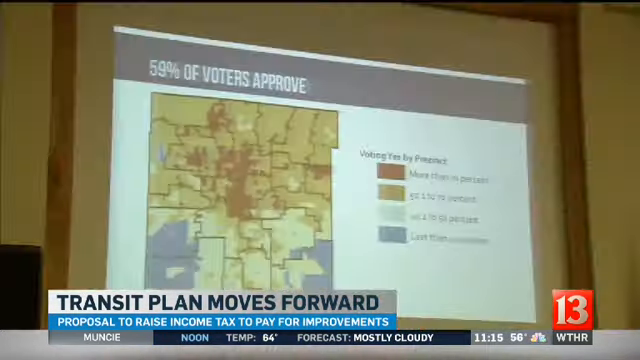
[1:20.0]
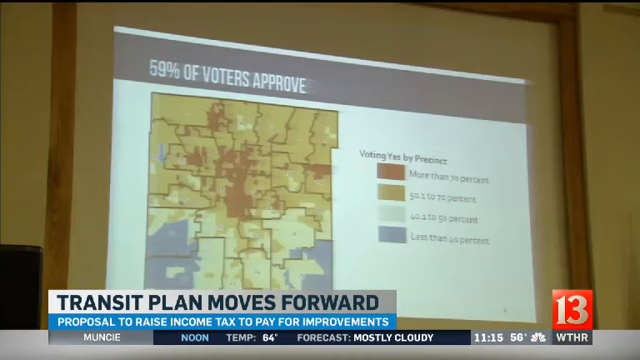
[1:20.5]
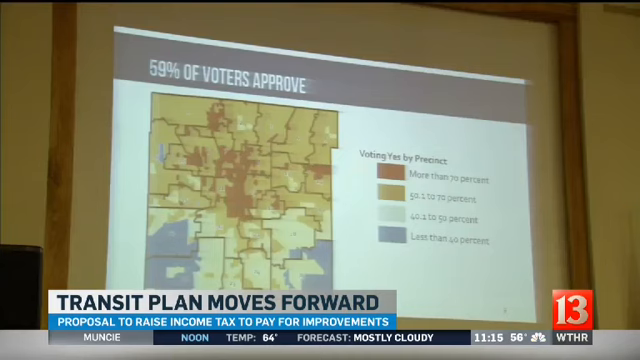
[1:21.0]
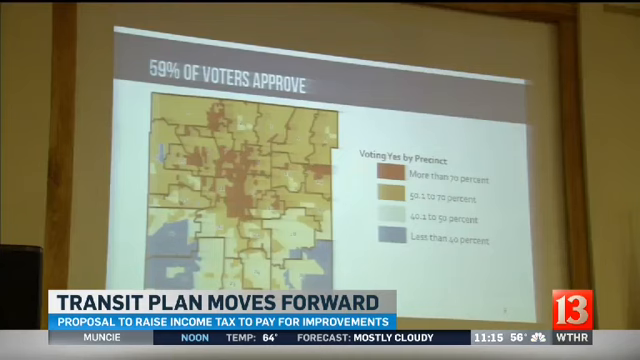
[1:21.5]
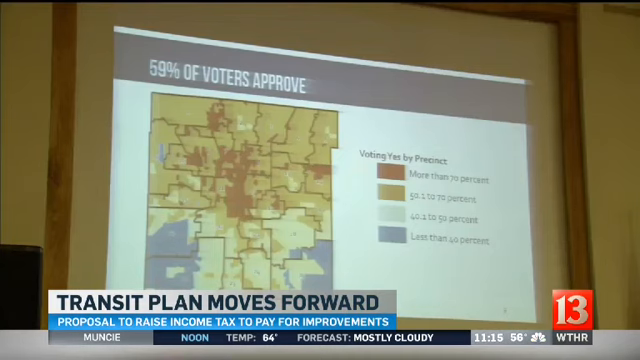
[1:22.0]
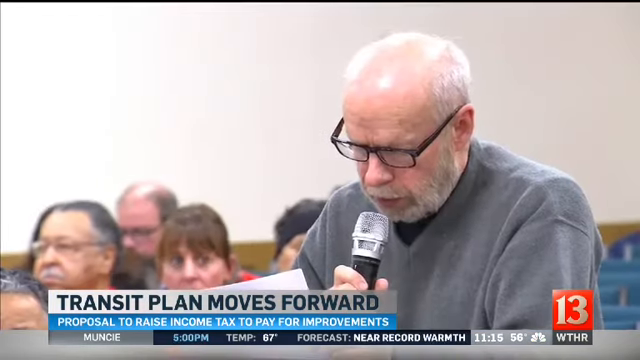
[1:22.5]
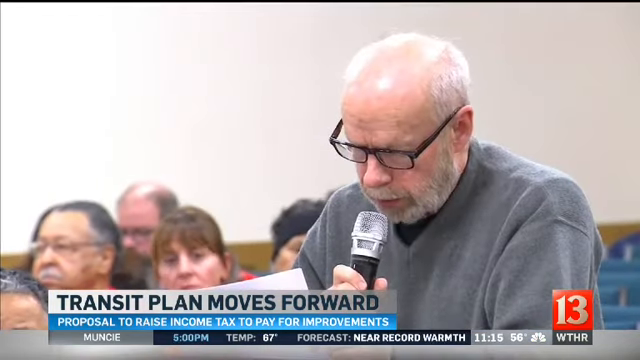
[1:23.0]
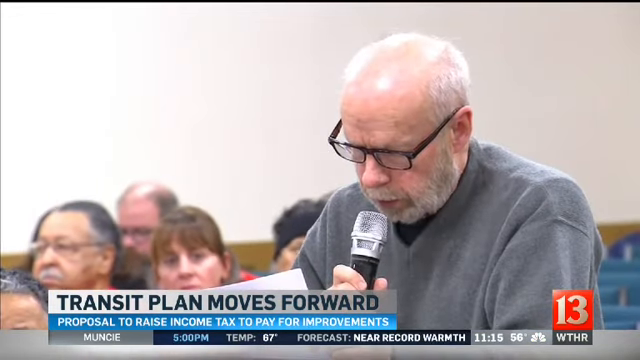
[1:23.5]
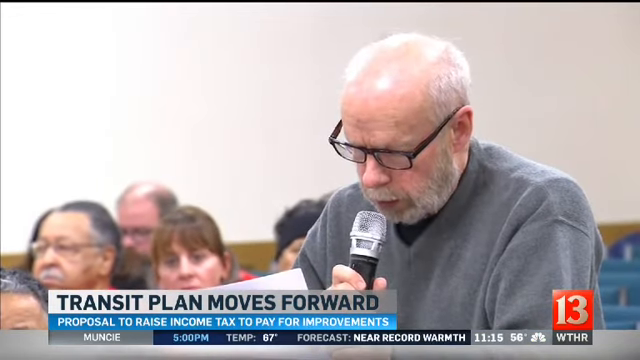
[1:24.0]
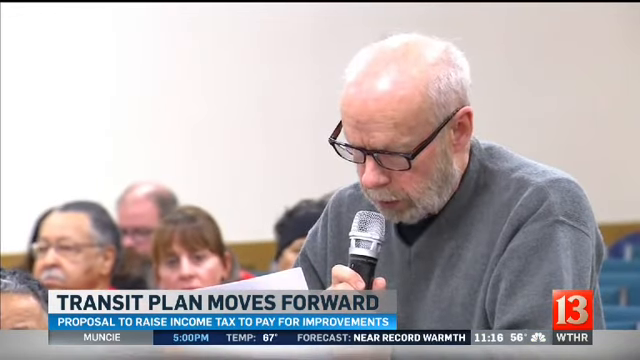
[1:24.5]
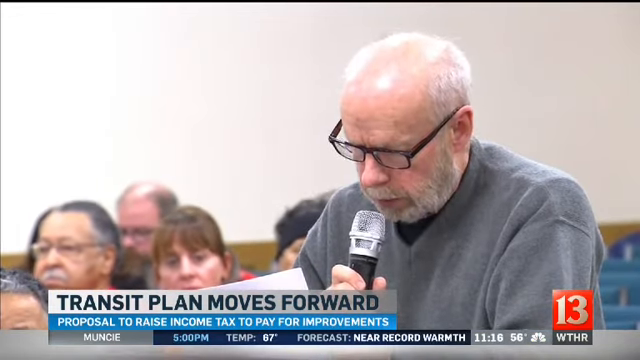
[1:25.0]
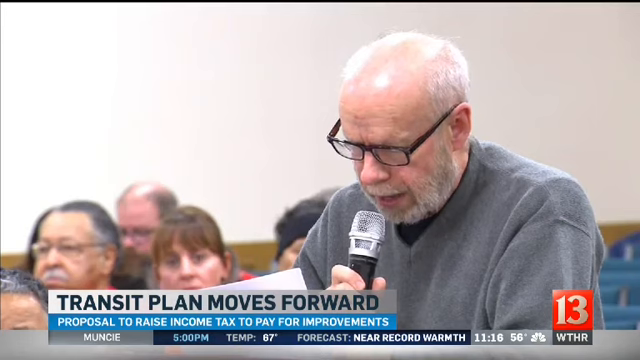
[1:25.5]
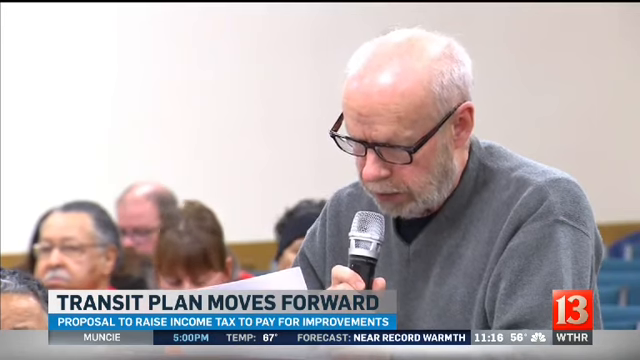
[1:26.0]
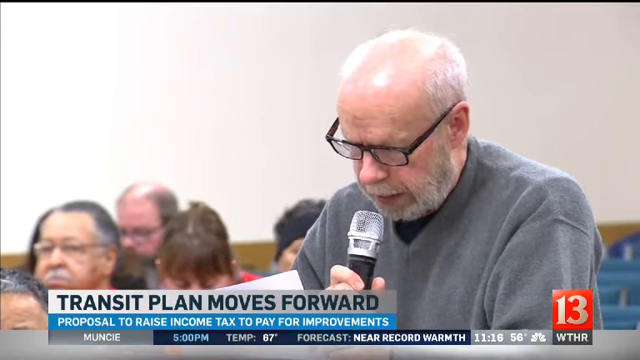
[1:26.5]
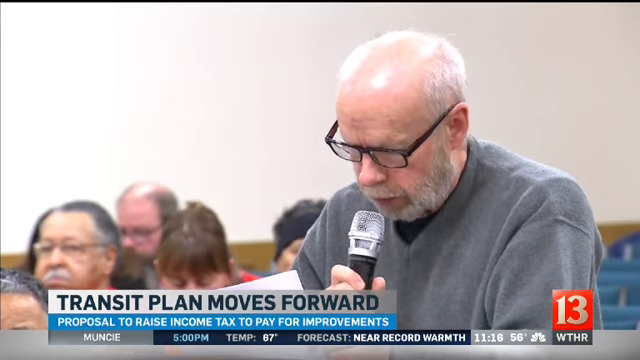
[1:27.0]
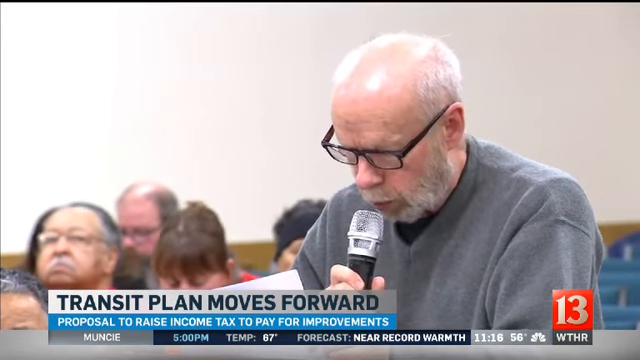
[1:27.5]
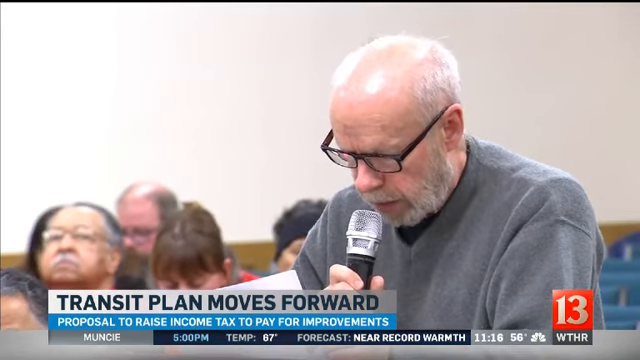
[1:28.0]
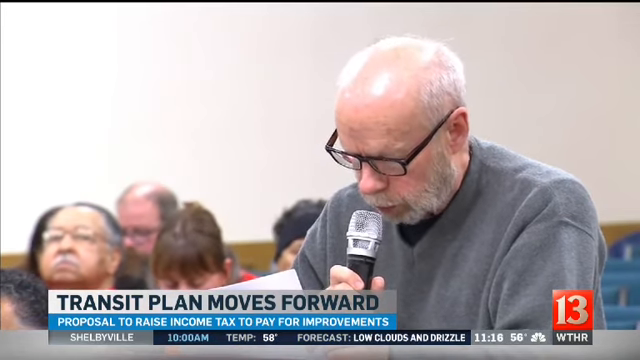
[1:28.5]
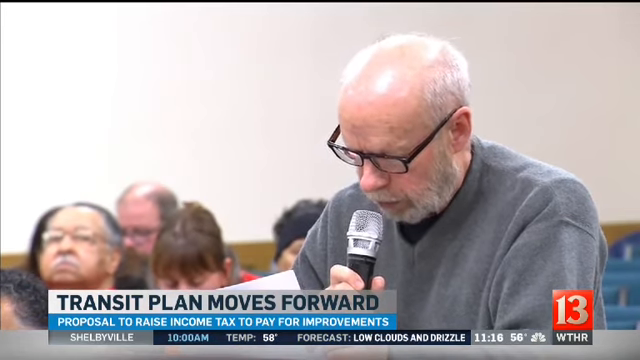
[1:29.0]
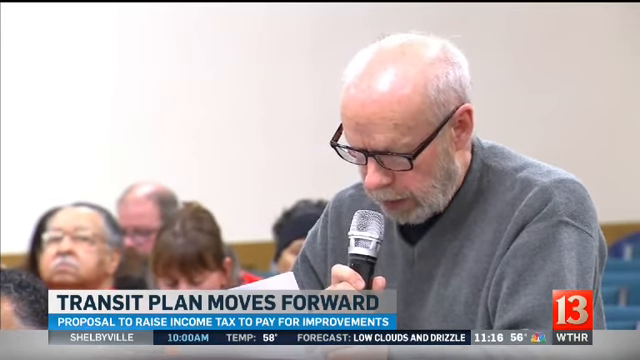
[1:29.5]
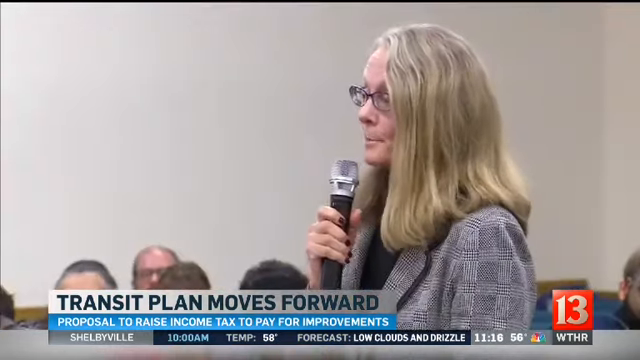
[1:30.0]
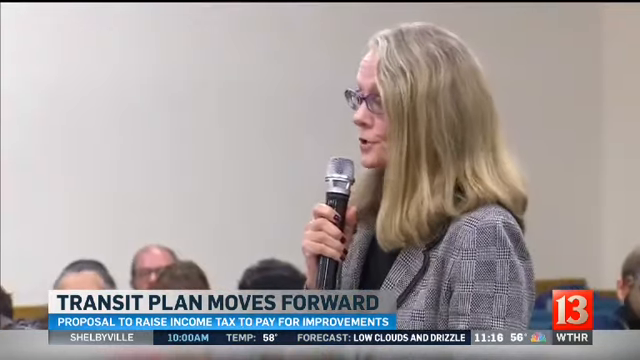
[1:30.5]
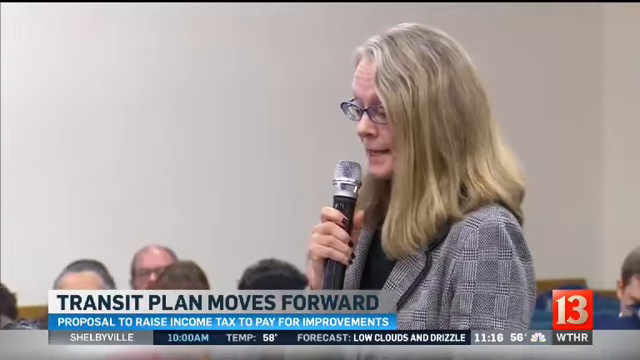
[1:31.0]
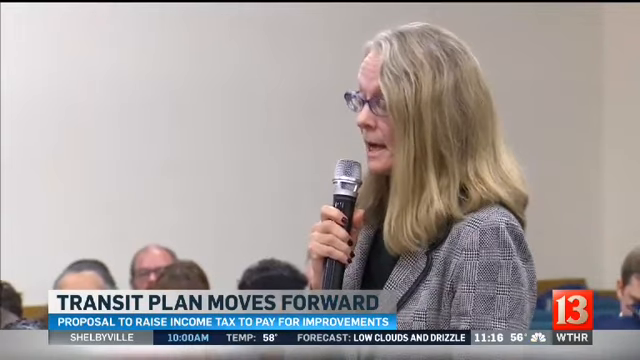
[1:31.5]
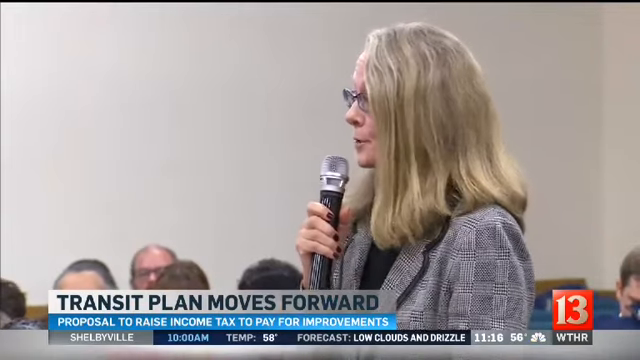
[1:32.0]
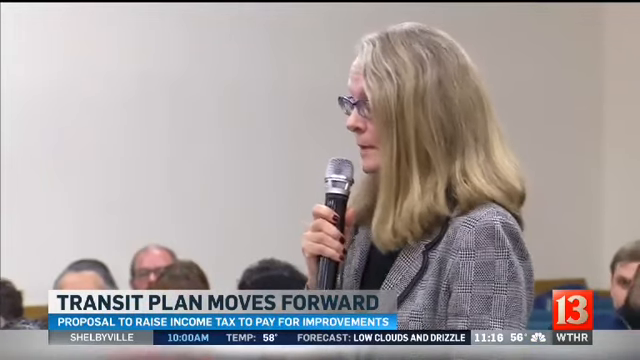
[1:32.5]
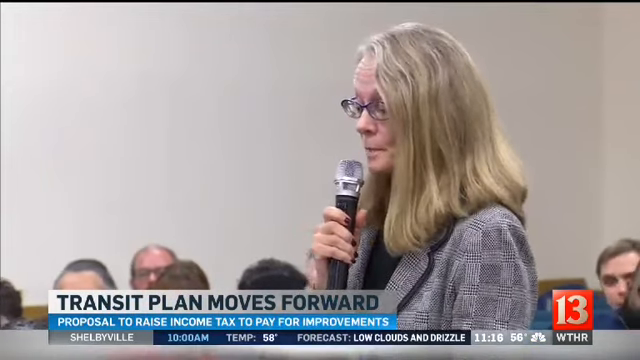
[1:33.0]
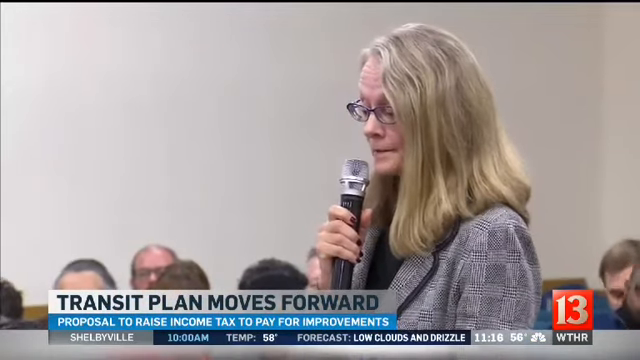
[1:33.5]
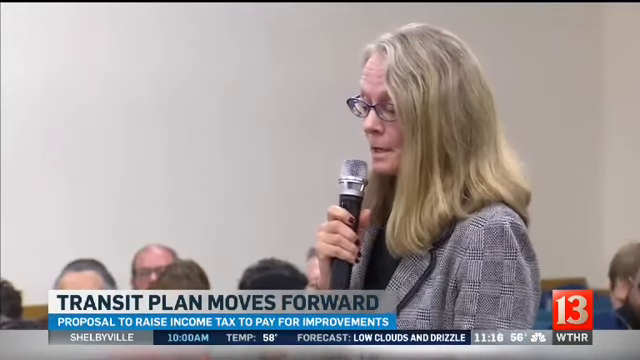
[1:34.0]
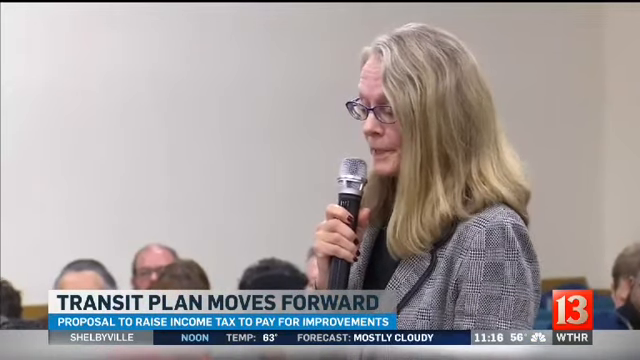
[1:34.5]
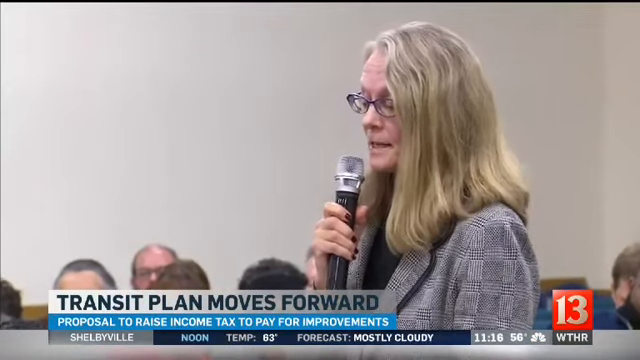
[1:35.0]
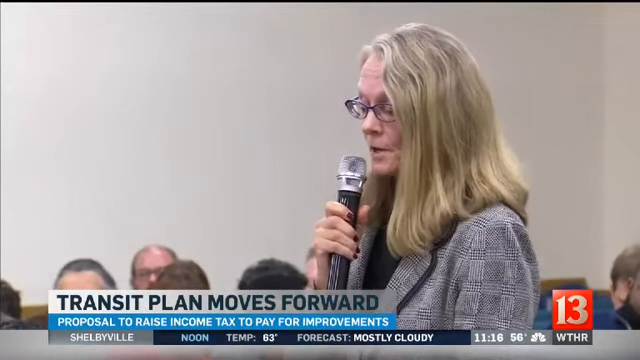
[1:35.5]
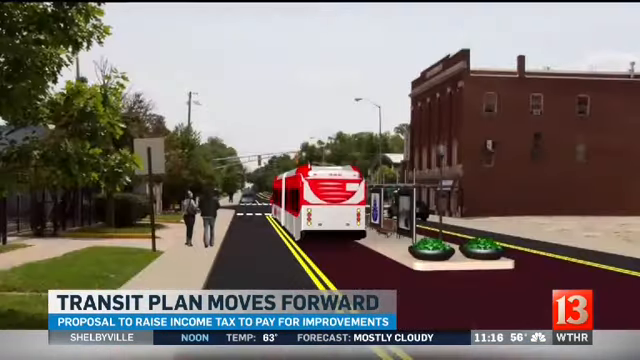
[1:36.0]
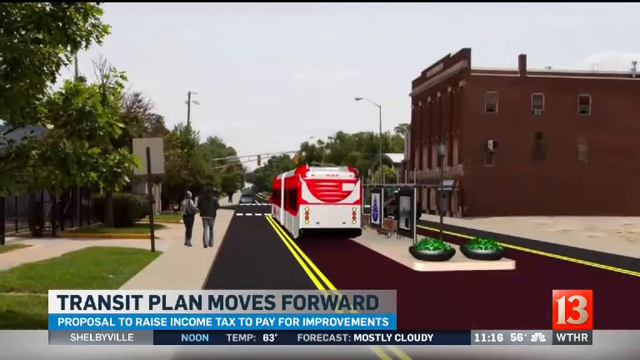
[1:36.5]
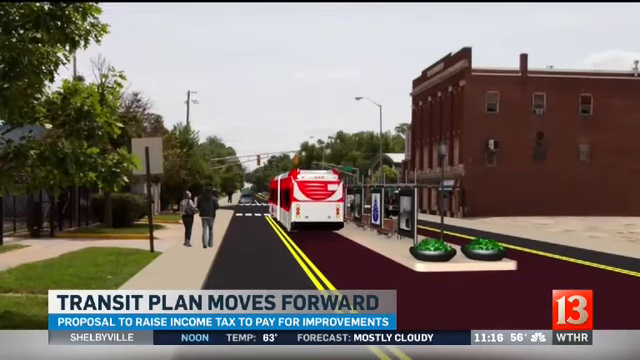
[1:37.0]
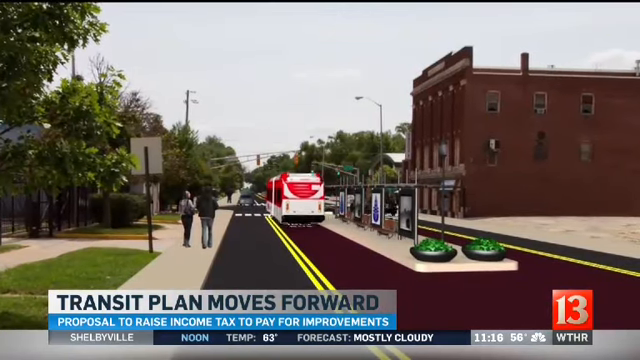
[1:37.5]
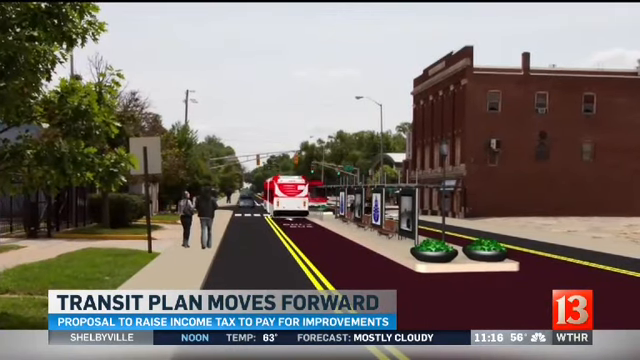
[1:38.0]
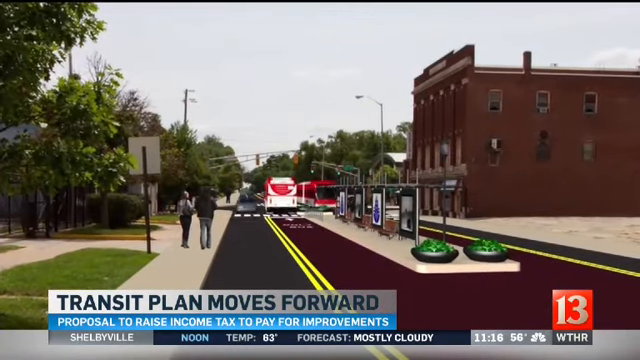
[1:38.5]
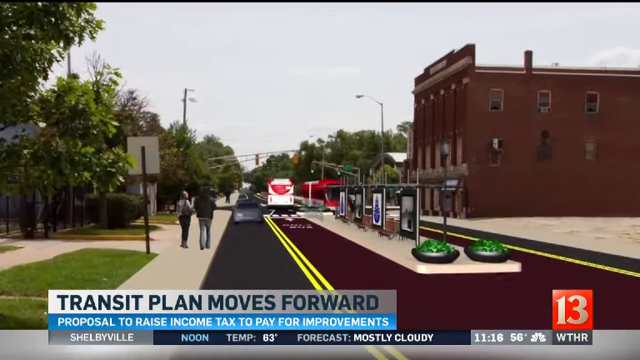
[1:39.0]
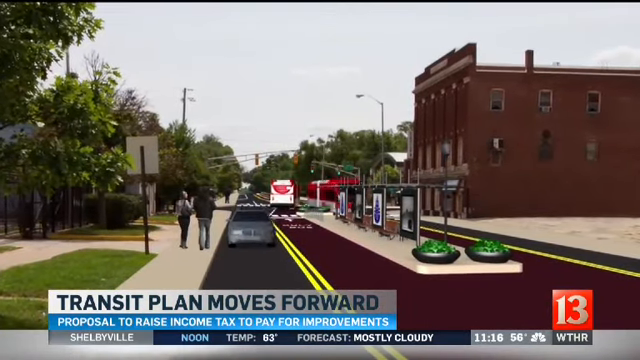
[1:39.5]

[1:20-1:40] A projection on a wall has a blue bar at the top with white text saying "59% of voters approve". Some kind of map is at the bottom, apparently showing different counties in a state. It says "voting by precinct" and "more than 70%"; the rest of the text is hard to read. In the bottom right is a red square with the number 13 in white. A white rectangle says "transit plan moves forward", with "proposal to raise income tax to pay for improvements" underneath, and then "Muncie" with information such as the weather. A balding man with gray hair, black glasses and a gray sweater speaks into a microphone while looking at a piece of paper, and people seem to be watching. The shot cuts to a woman with long blonde hair in a gray blazer who is talking. Then it cuts to a 3D CGI video of a bus moving forward through a city while another bus comes the other way; two people are walking along the sidewalk but do not move.